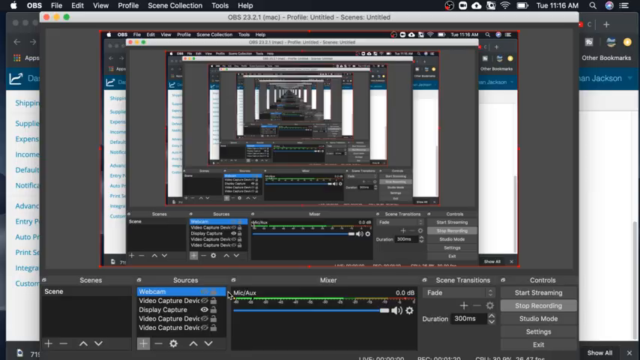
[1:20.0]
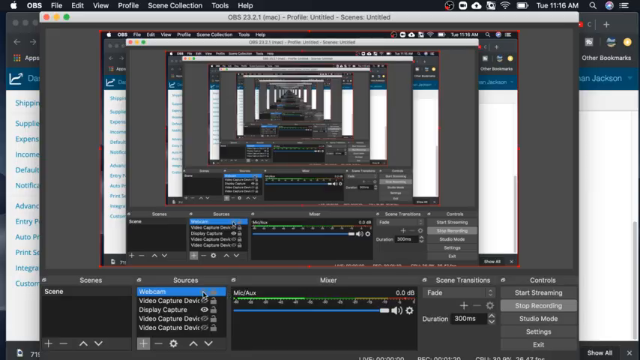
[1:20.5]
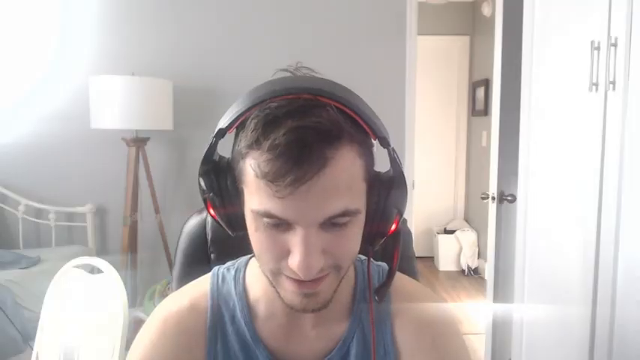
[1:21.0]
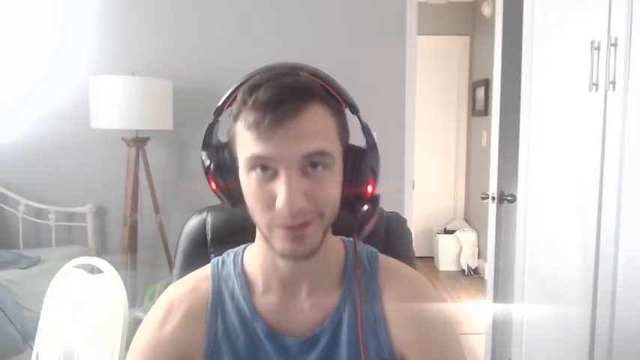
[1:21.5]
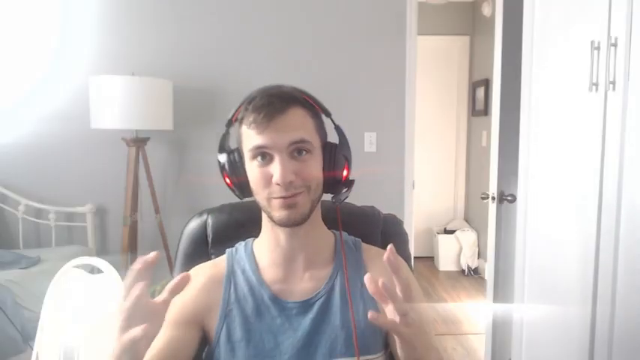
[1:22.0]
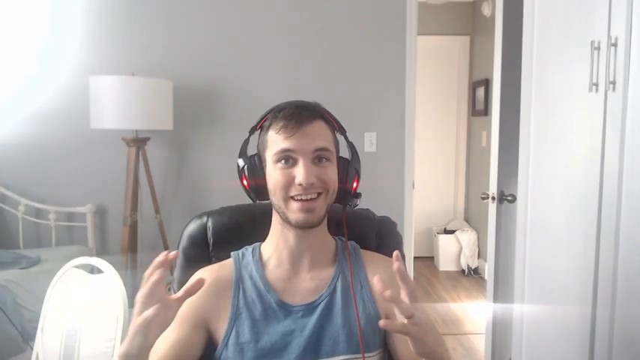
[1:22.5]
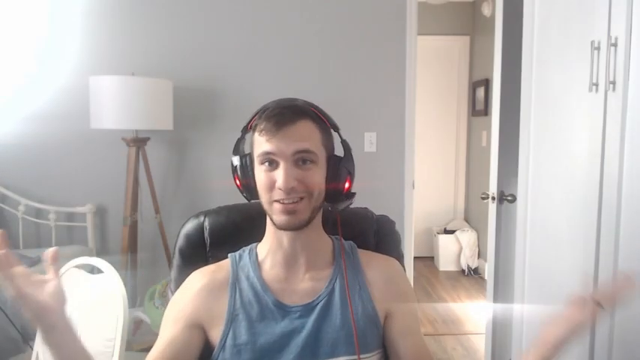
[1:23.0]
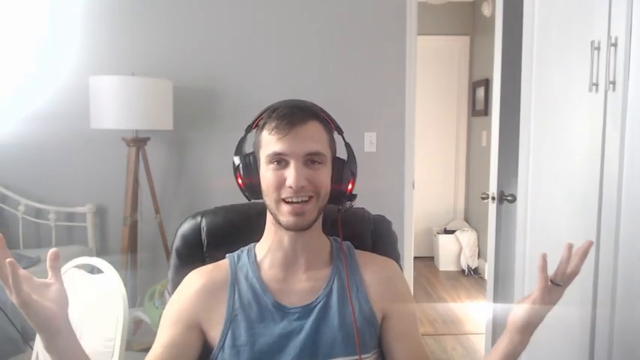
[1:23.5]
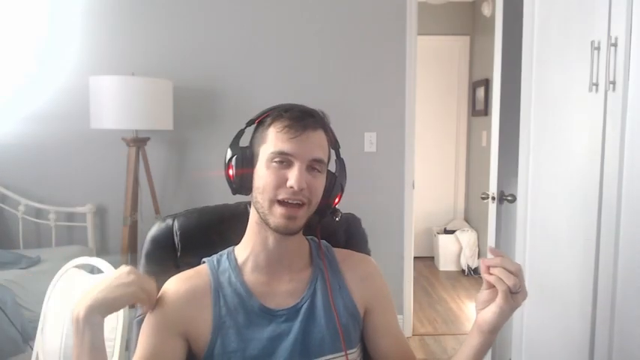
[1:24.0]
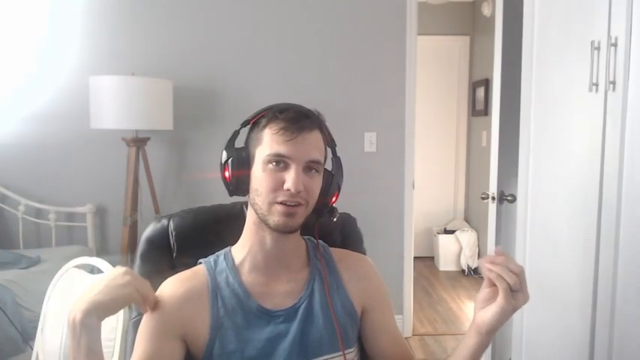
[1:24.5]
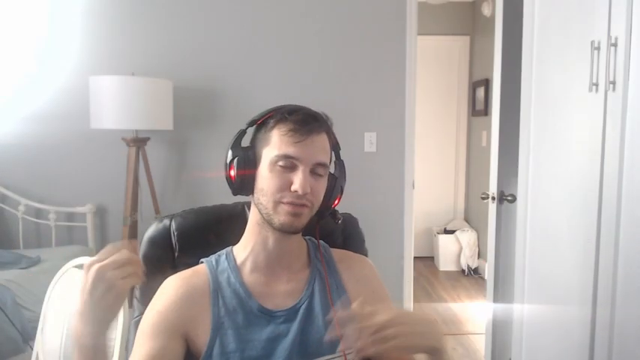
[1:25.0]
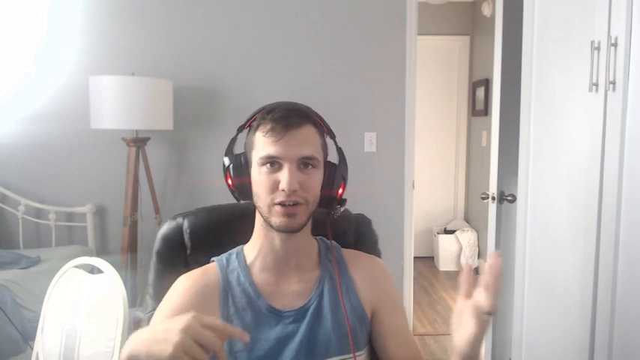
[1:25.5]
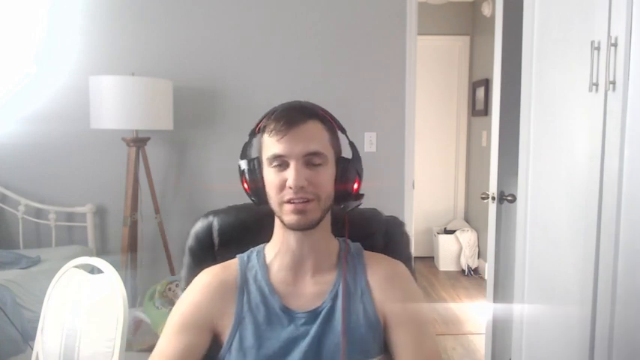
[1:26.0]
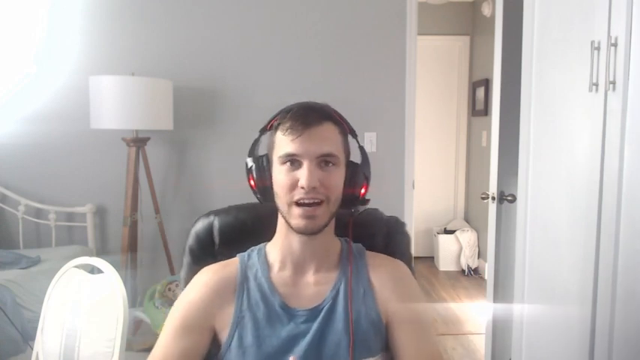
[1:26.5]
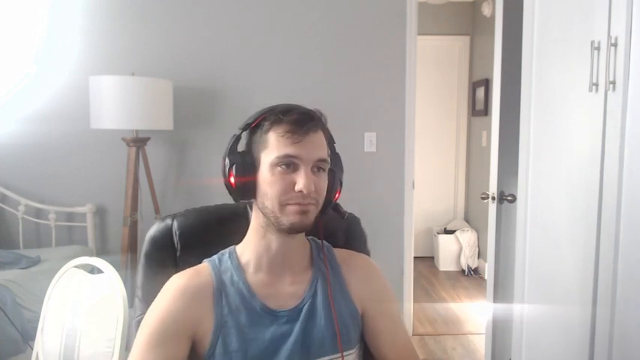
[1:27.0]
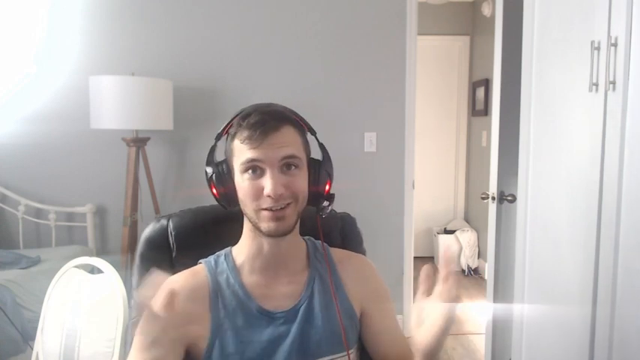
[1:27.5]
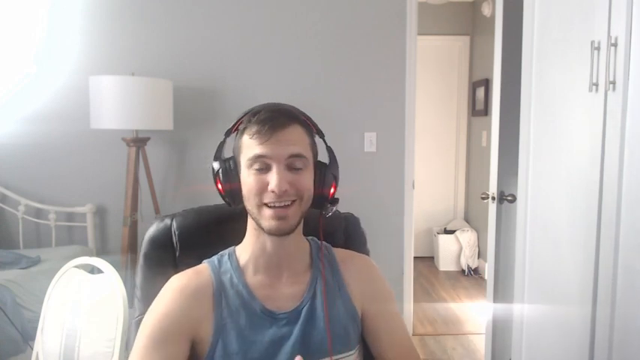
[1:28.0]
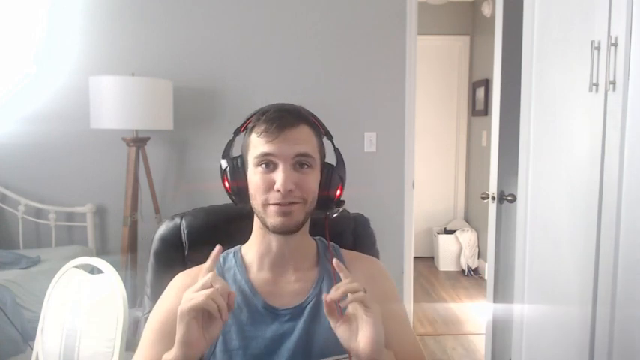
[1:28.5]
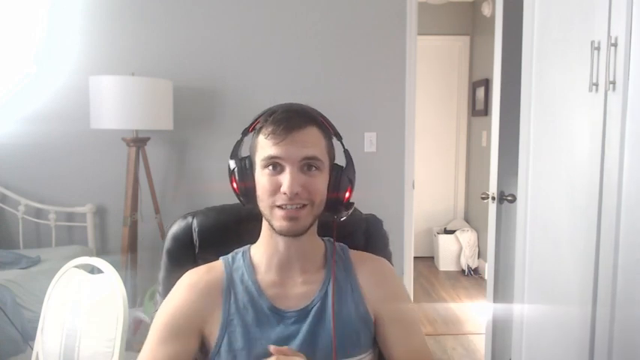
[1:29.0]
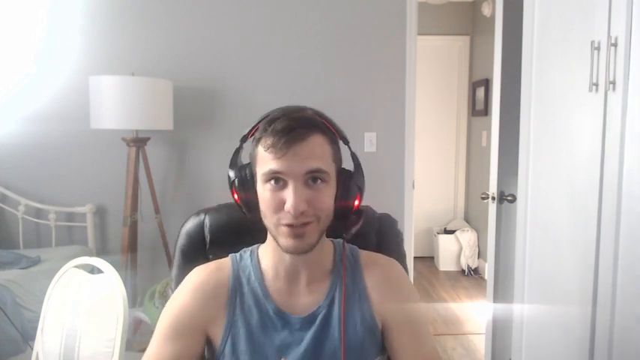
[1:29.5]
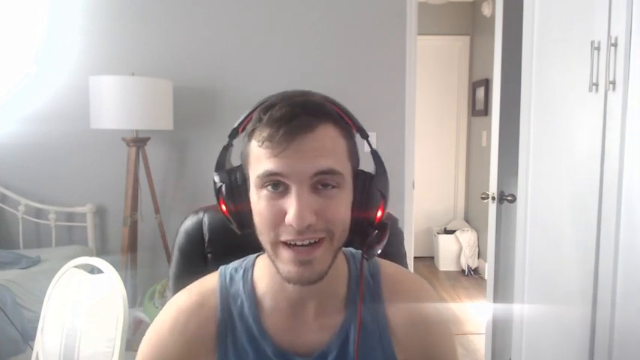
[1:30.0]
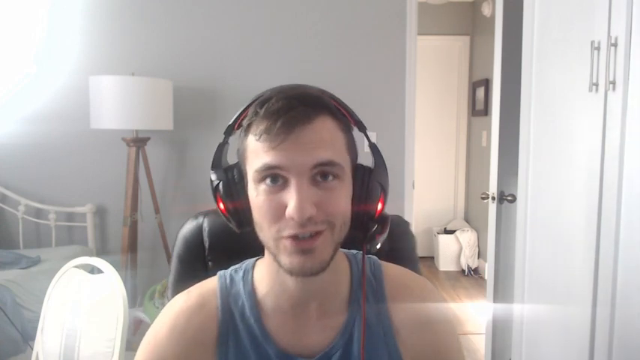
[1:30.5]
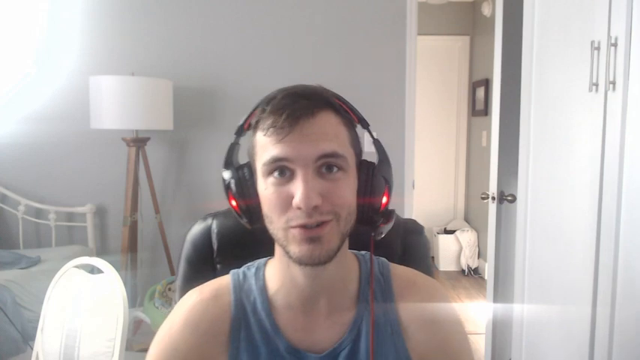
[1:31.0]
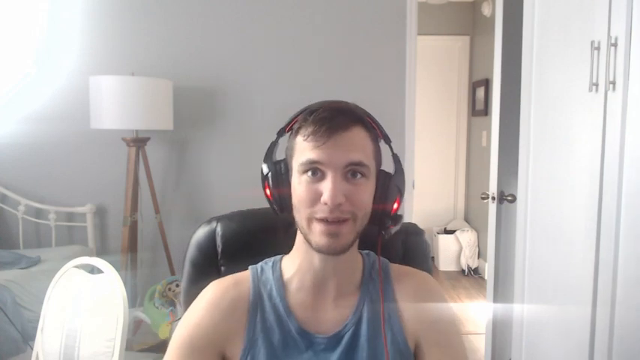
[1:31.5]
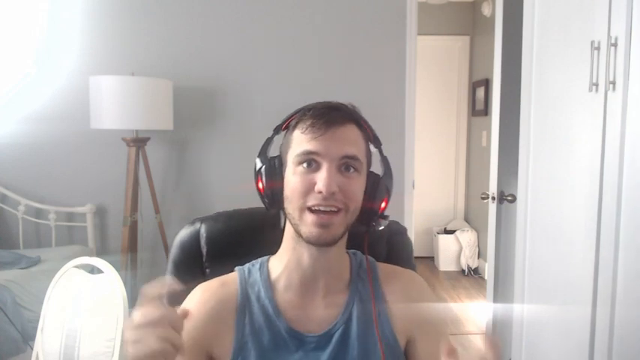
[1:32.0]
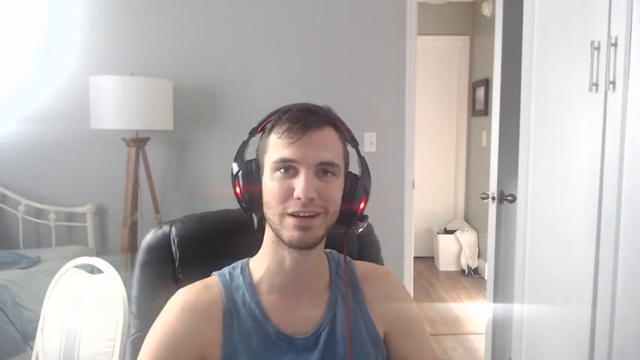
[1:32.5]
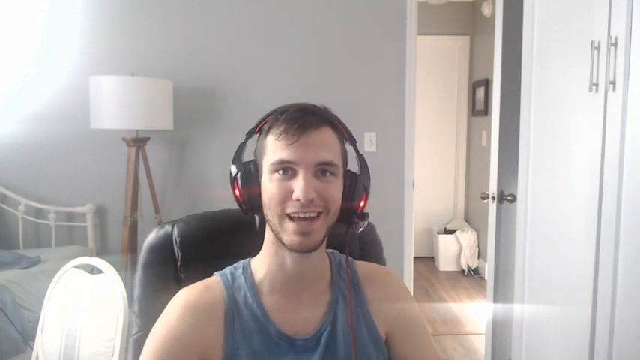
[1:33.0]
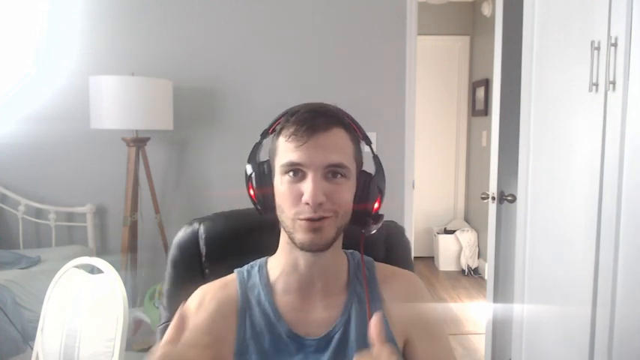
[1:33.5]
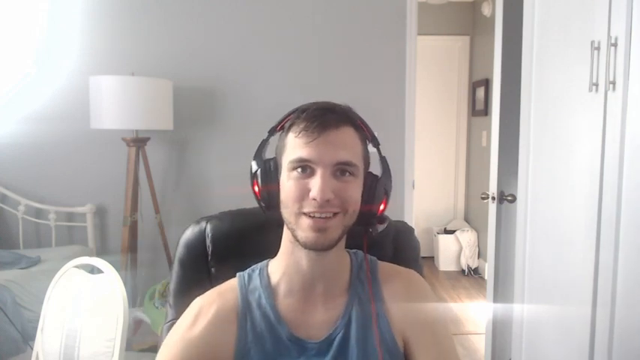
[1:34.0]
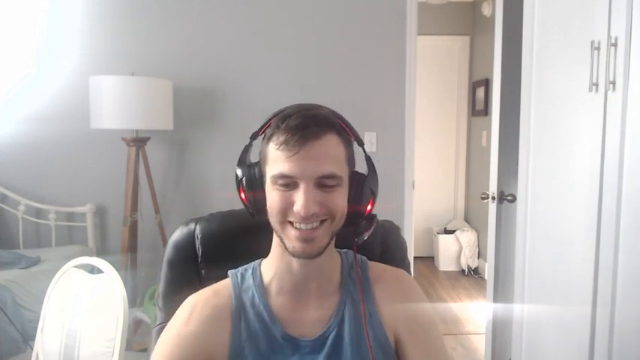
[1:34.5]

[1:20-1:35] The view returns to the young man, who is speaking into the camera. On his left, a red wire comes down from his headphones as if plugged into something. On the right side is a white closet with a stainless steel handle. His door is open, giving a view of the hallway with wood floors and another white door just beyond it. His bed is in the bottom left corner, along with a chair, and there is a tall wooden lamp with a white square-shaped lampshade. He speaks some more, and then the video ends.